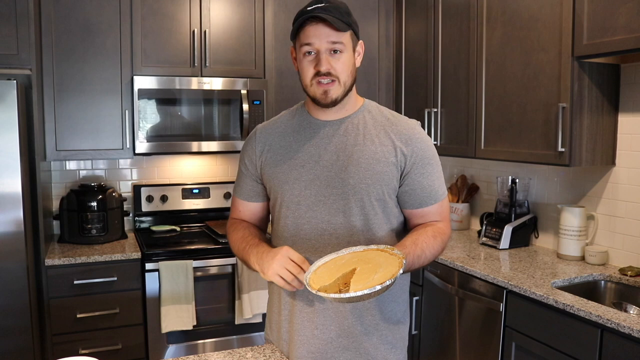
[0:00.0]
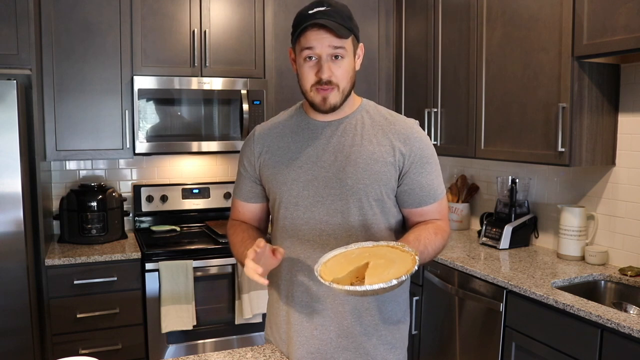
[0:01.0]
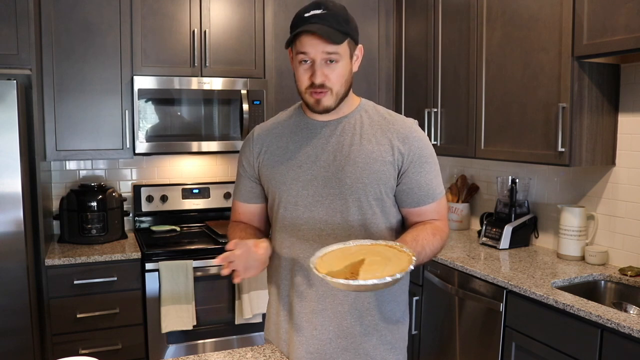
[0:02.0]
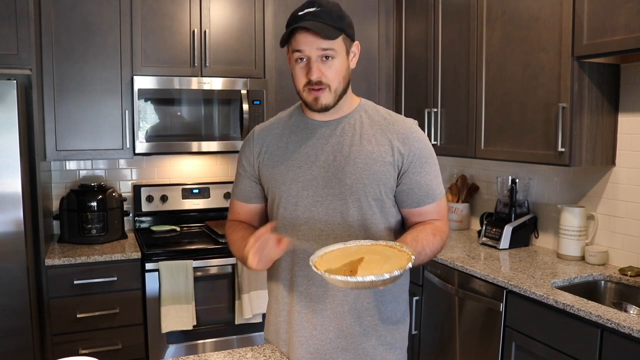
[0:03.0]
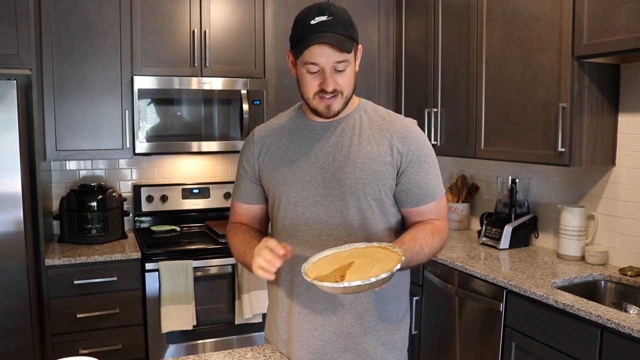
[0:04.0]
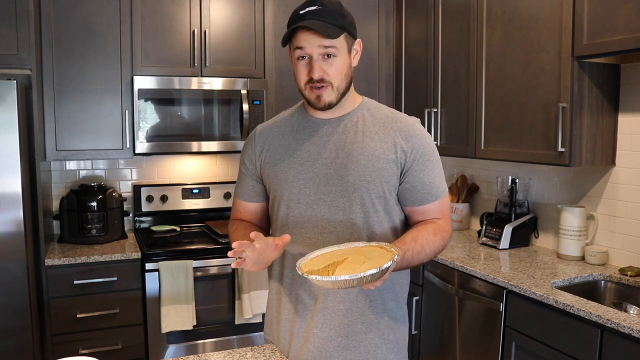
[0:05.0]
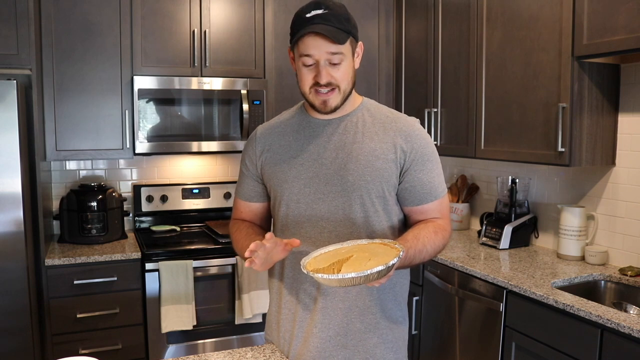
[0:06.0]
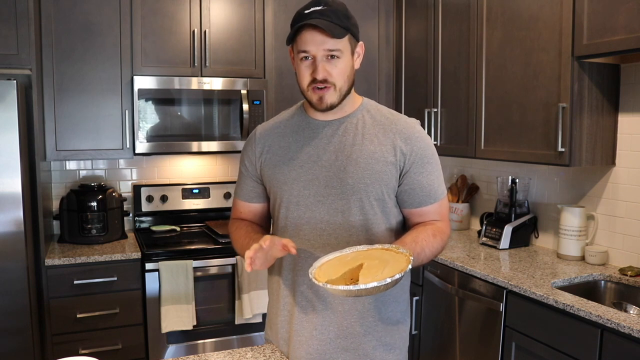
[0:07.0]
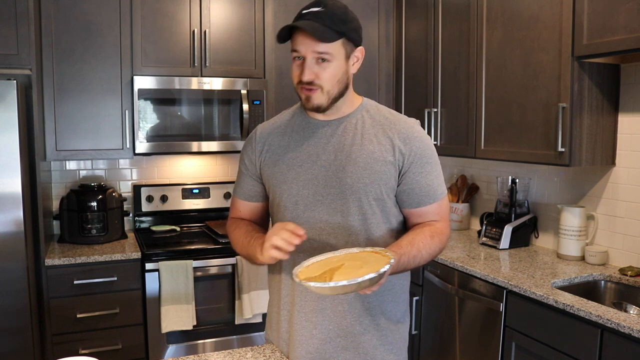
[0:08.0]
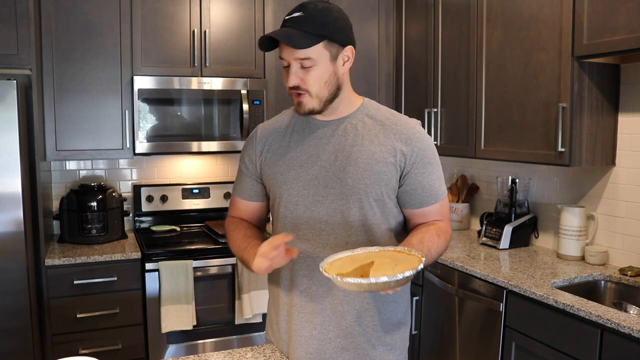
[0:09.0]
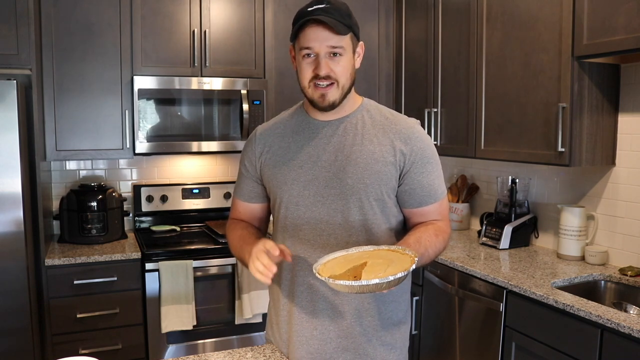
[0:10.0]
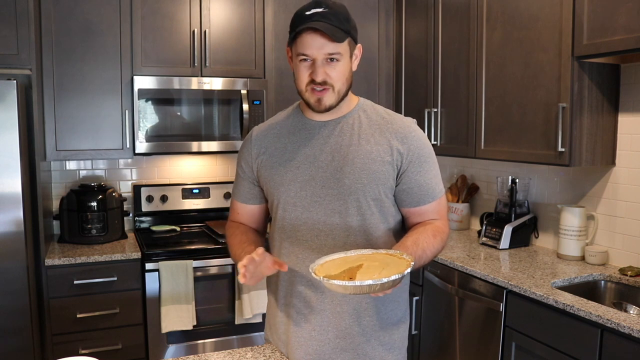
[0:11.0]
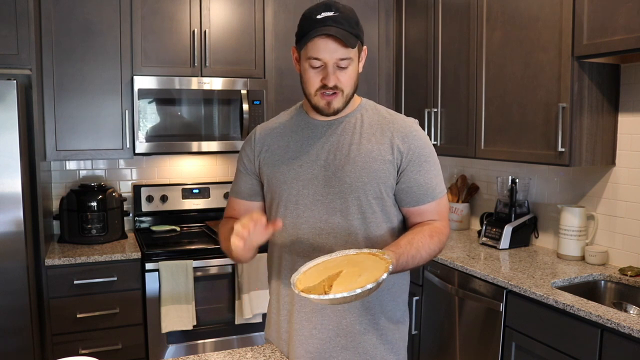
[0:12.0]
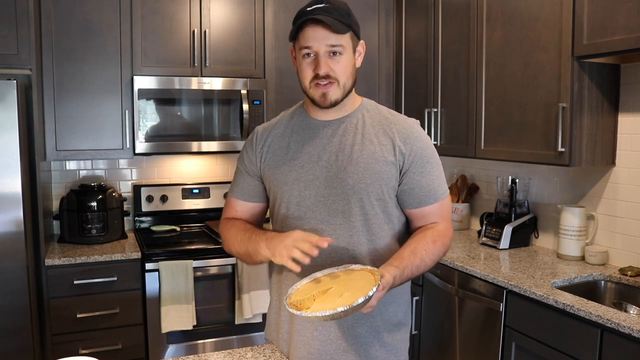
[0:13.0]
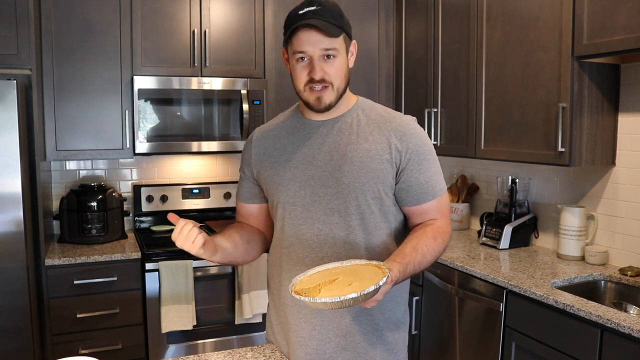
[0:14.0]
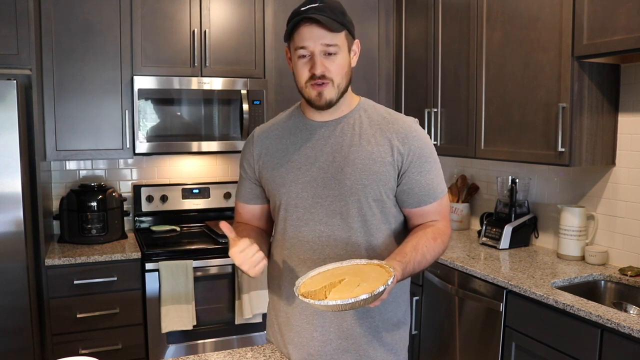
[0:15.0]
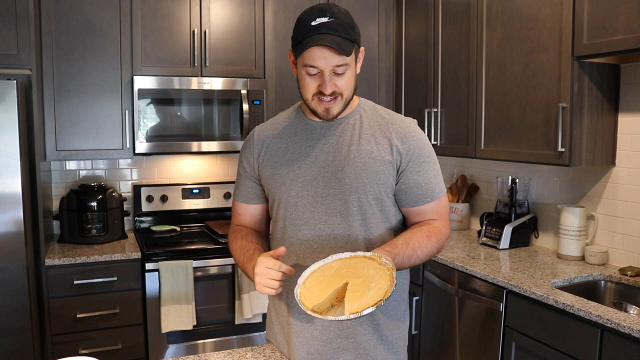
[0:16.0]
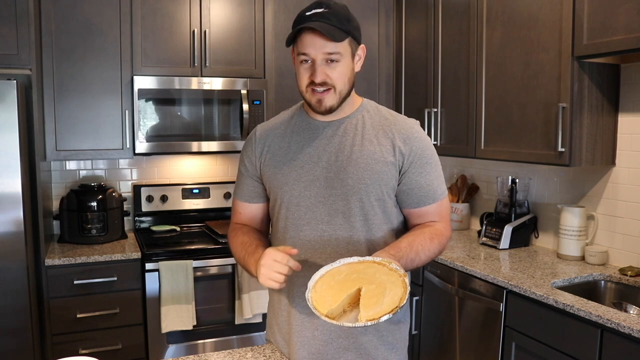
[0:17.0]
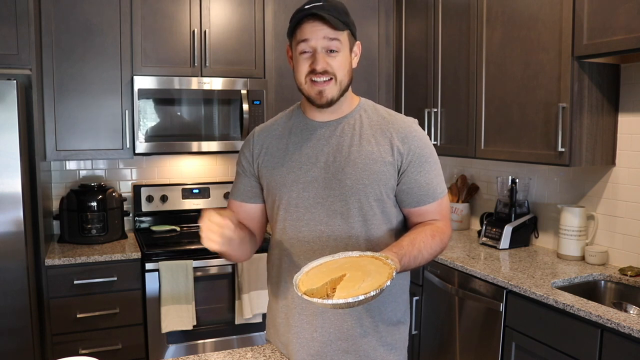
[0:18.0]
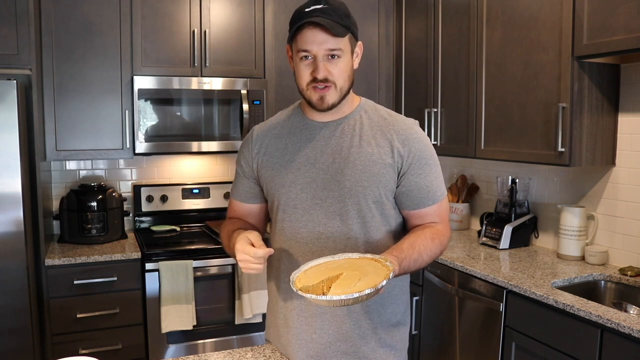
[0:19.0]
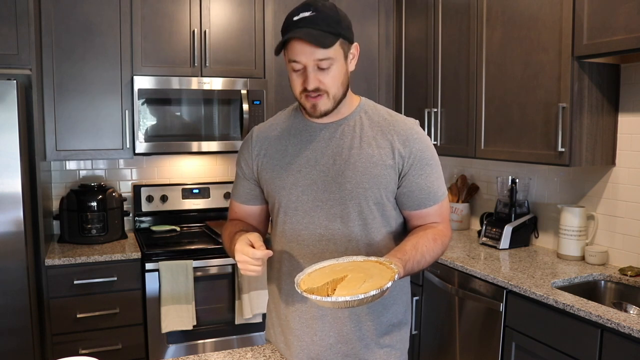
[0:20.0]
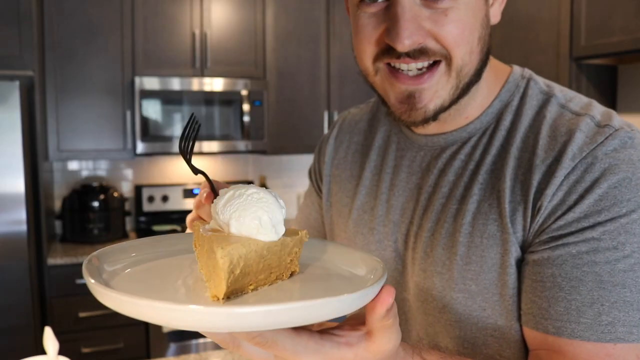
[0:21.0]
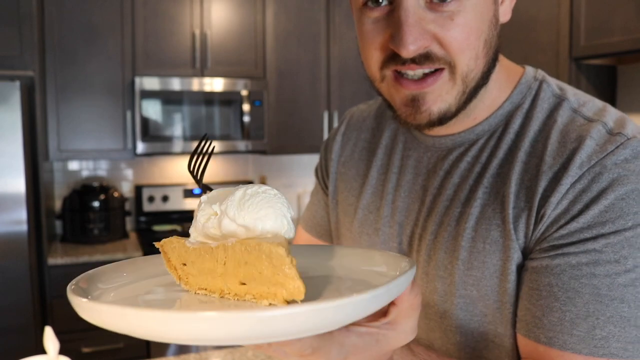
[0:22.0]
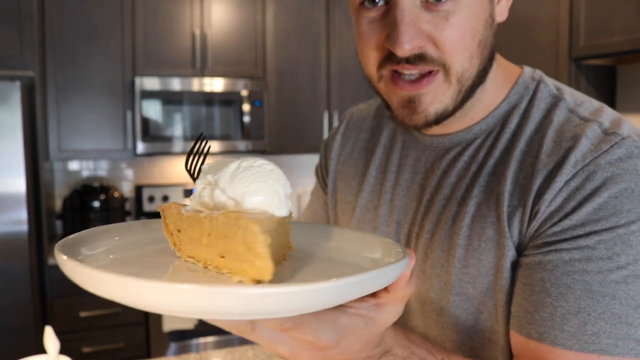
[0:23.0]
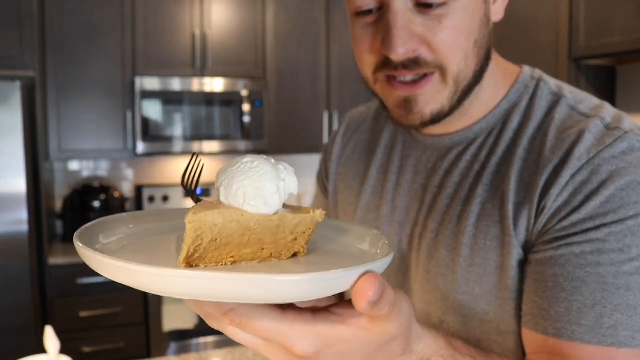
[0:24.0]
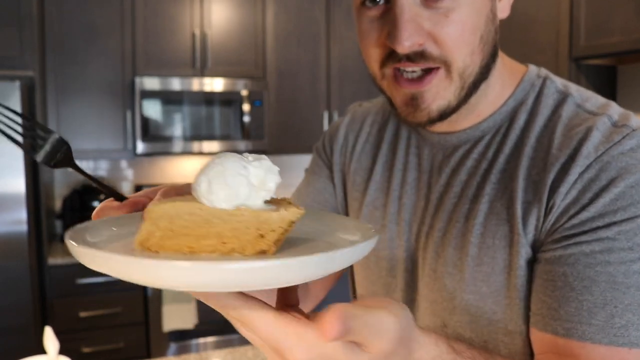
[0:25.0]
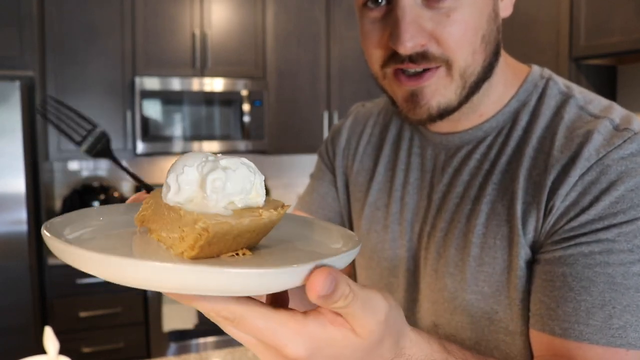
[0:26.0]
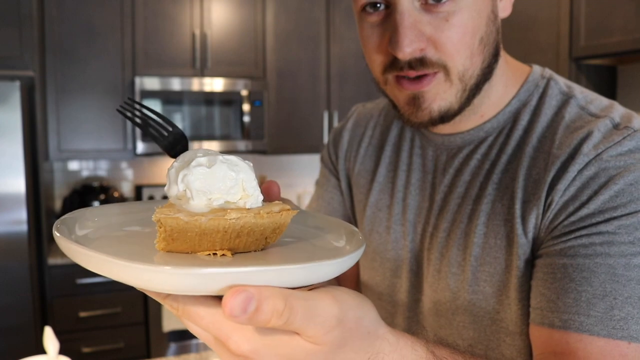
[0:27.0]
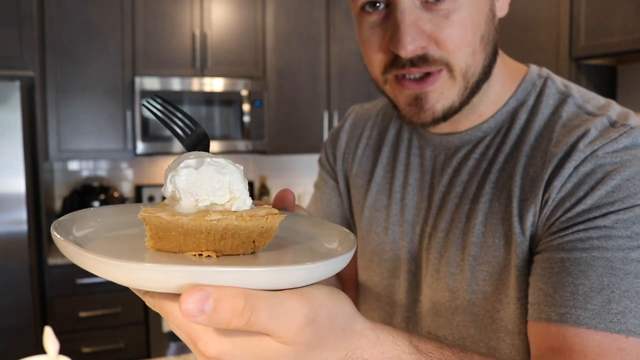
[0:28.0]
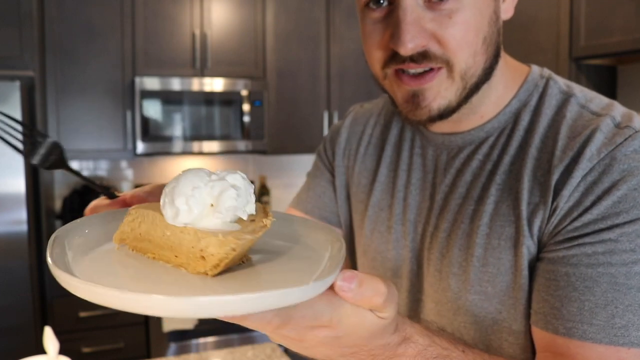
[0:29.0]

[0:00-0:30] A man introduces a pie in a kitchen-like environment, apparently about to show how to make it. He wears a grey t-shirt and holds the pie in his left hand. A cooker, a sink, other utensils, shelves and cabinets are visible in the kitchen. He talks while still holding the pie, looking at the pie and then at the camera as he keeps talking. As he looks at the pie, one of his hands moves up, down, left and right. The video zooms in on a piece of pie with cream on top. He holds a fork, shows the pie to the camera on its white plate, and rotates it so it can be seen all around.